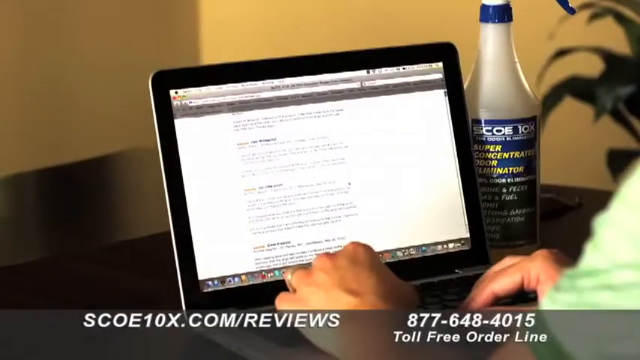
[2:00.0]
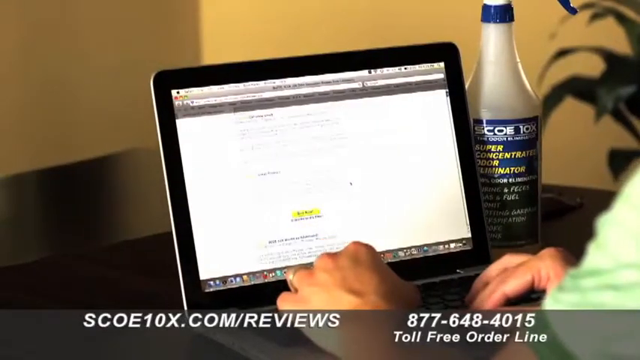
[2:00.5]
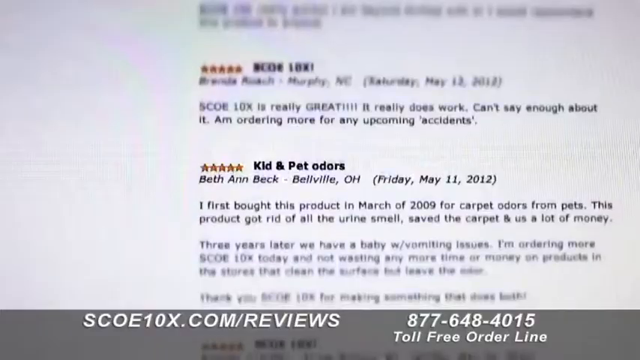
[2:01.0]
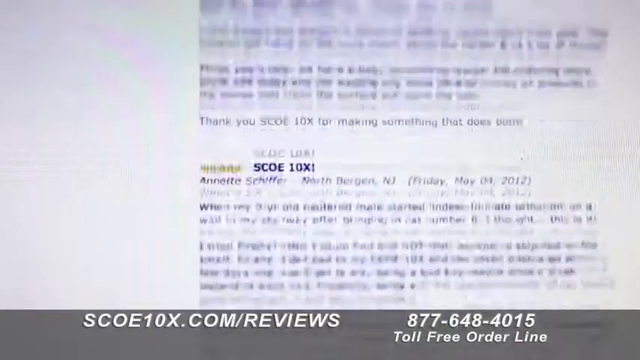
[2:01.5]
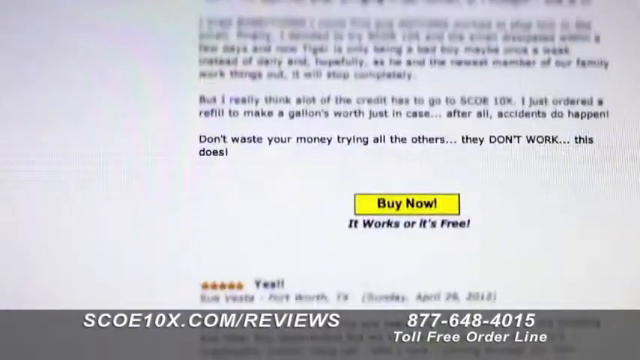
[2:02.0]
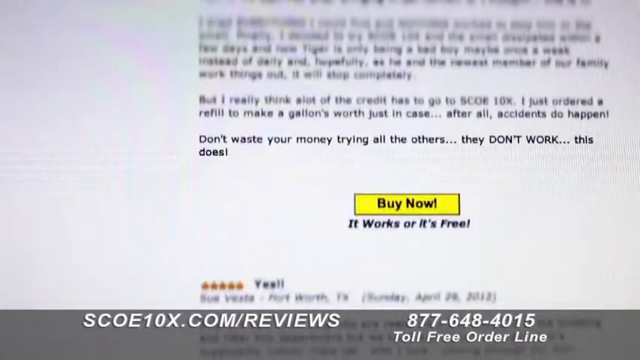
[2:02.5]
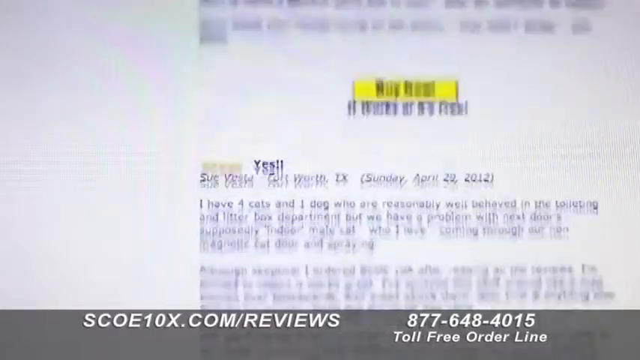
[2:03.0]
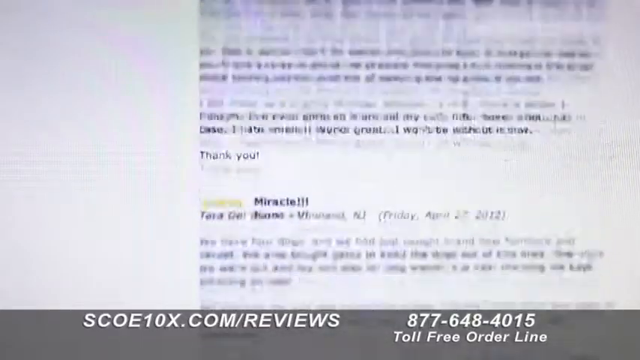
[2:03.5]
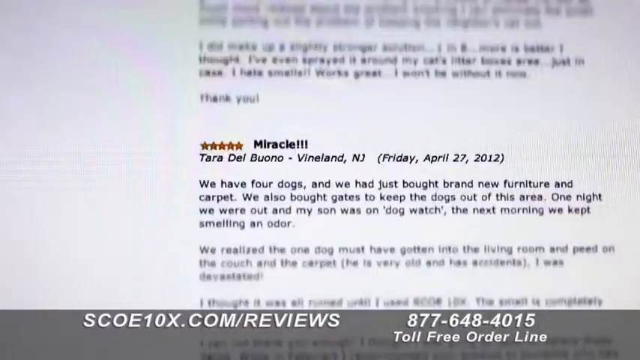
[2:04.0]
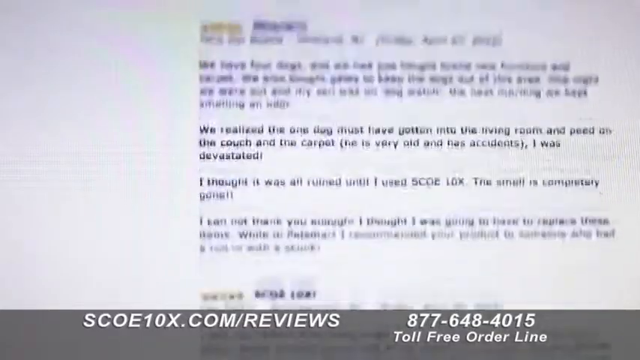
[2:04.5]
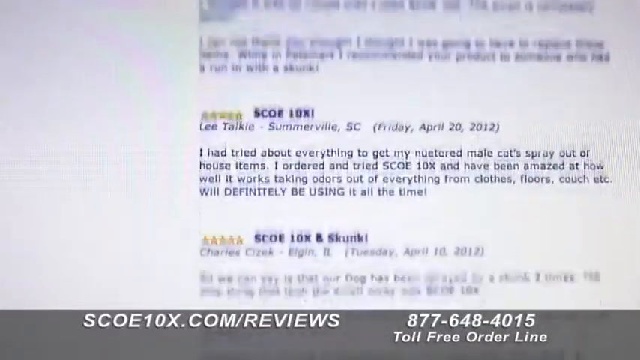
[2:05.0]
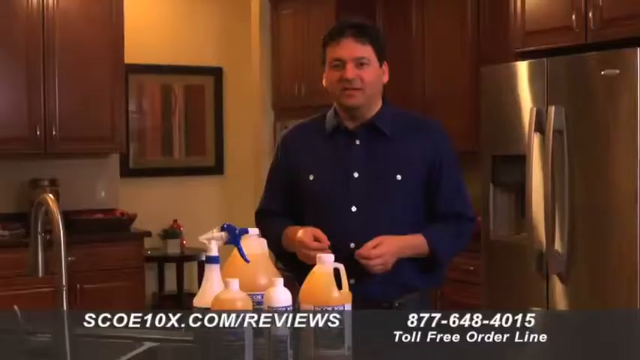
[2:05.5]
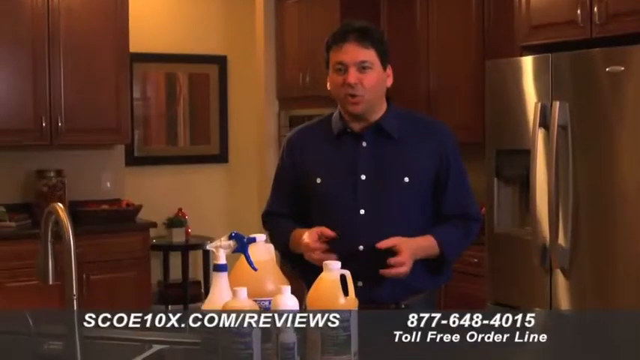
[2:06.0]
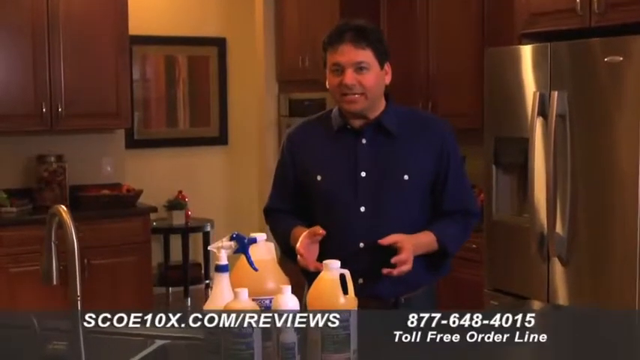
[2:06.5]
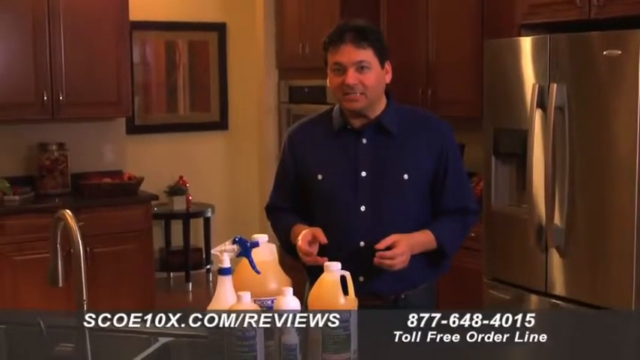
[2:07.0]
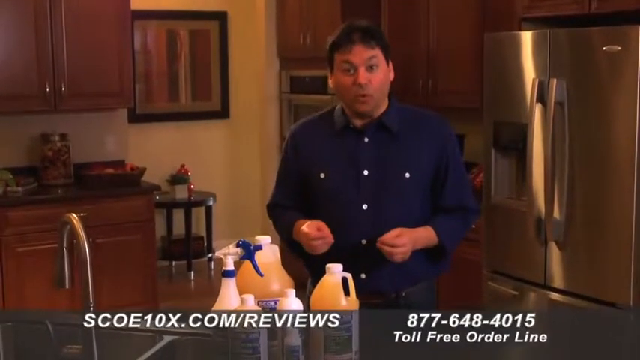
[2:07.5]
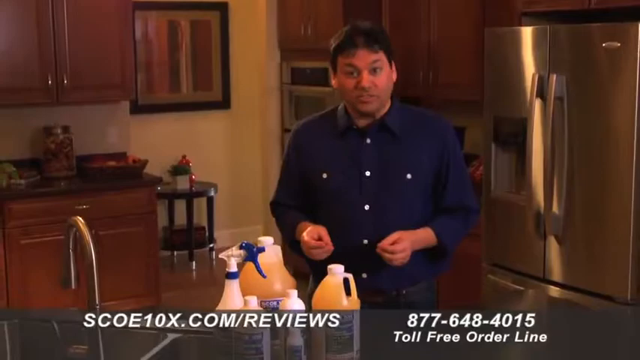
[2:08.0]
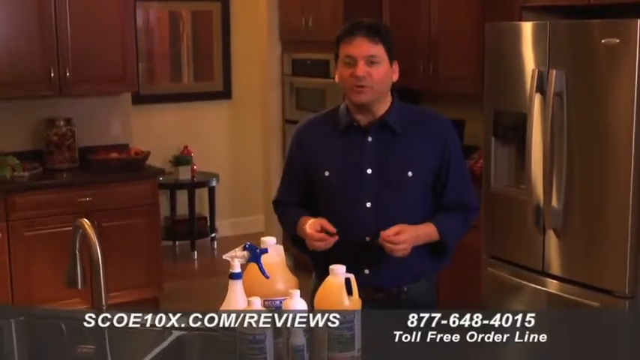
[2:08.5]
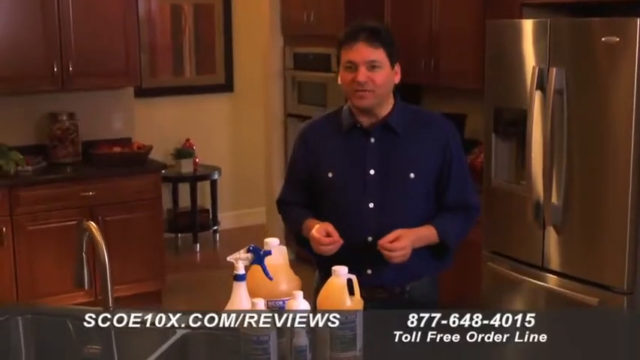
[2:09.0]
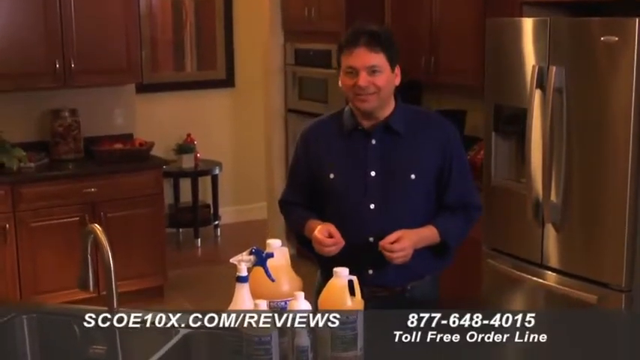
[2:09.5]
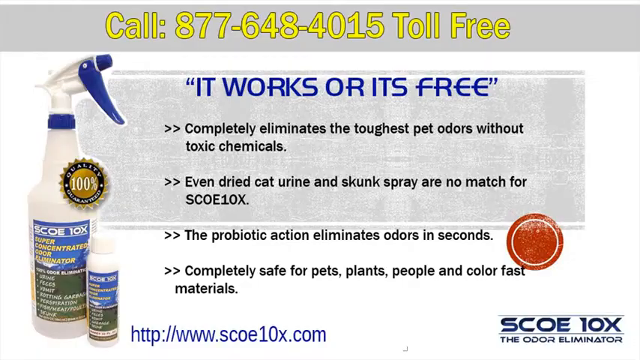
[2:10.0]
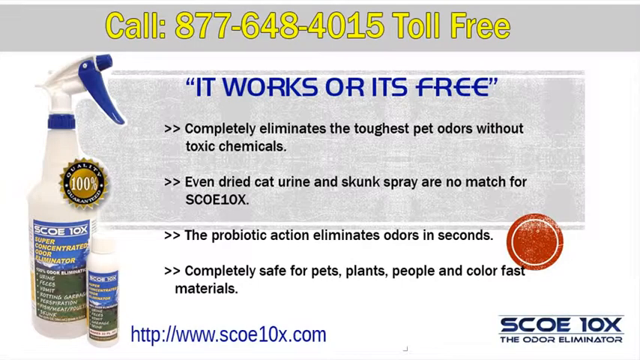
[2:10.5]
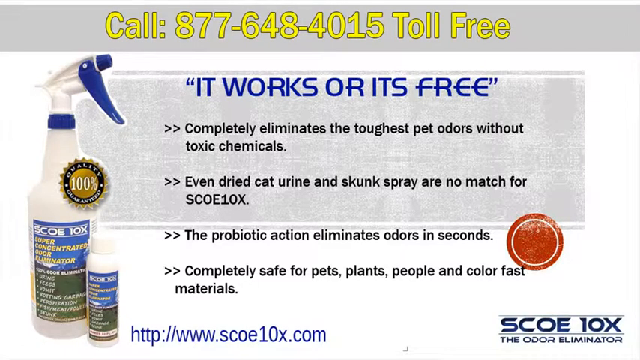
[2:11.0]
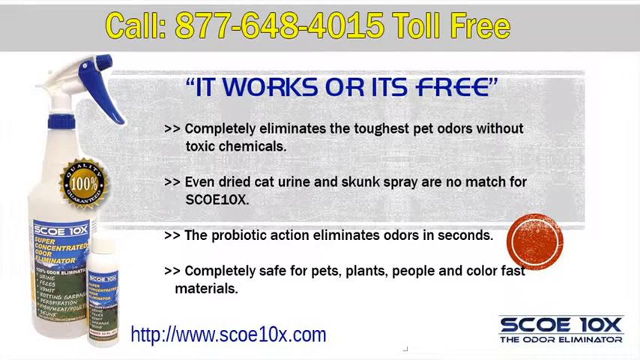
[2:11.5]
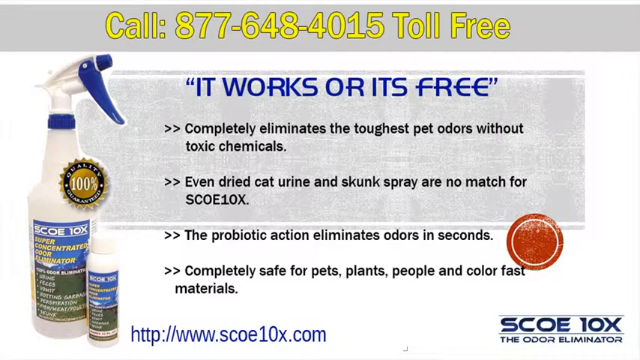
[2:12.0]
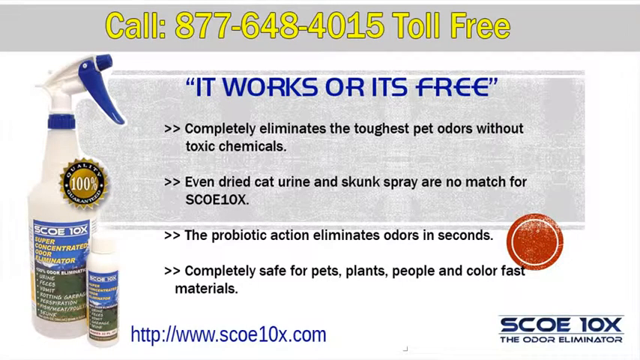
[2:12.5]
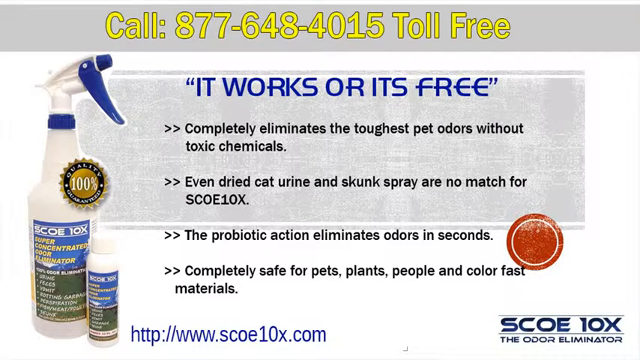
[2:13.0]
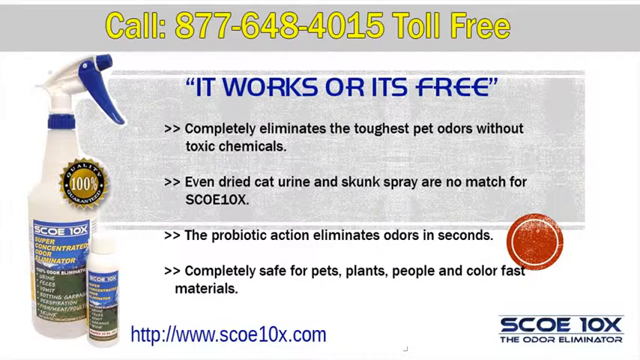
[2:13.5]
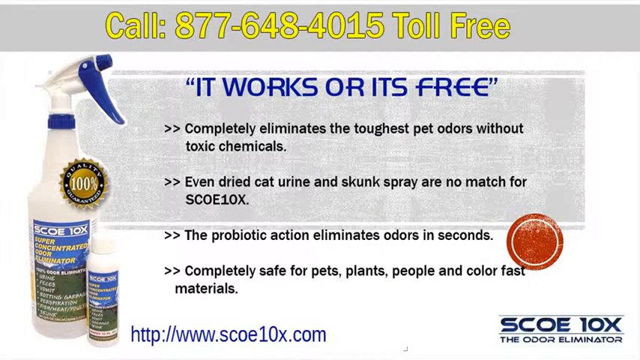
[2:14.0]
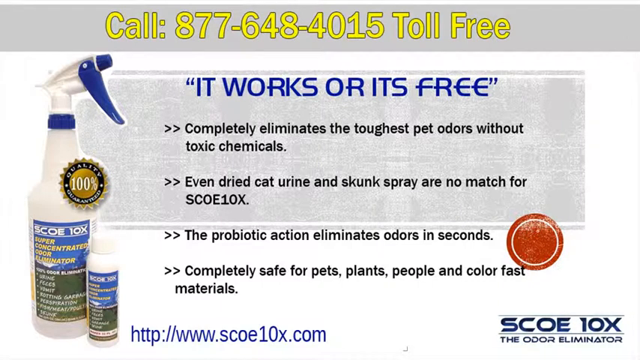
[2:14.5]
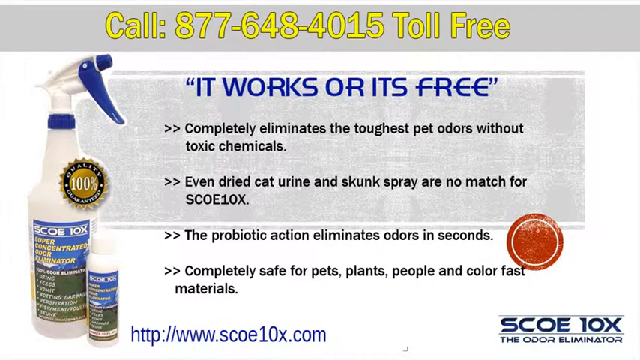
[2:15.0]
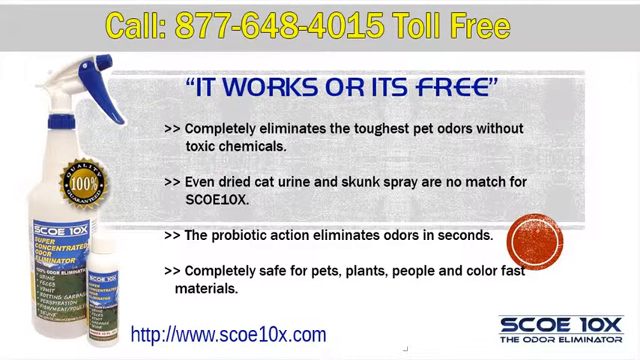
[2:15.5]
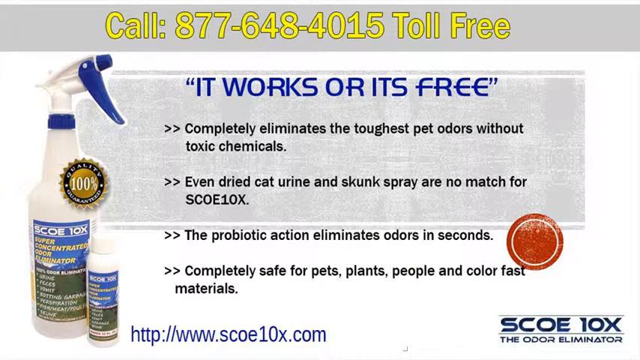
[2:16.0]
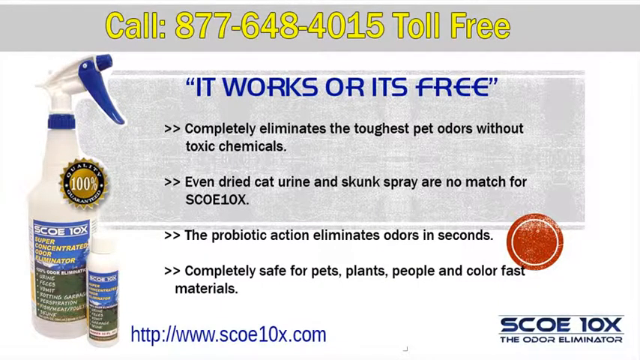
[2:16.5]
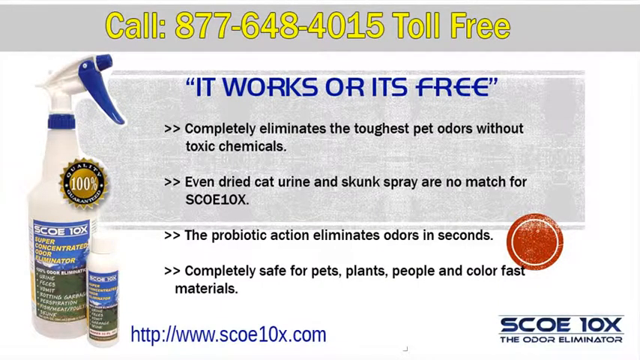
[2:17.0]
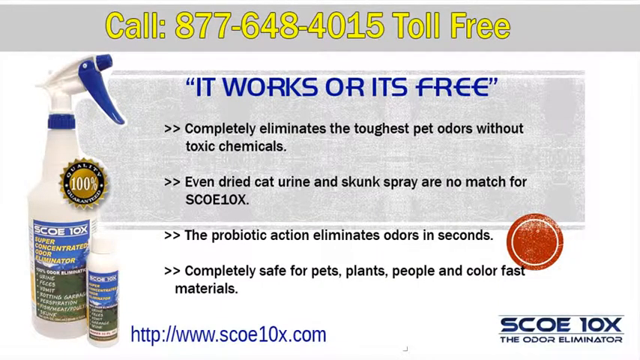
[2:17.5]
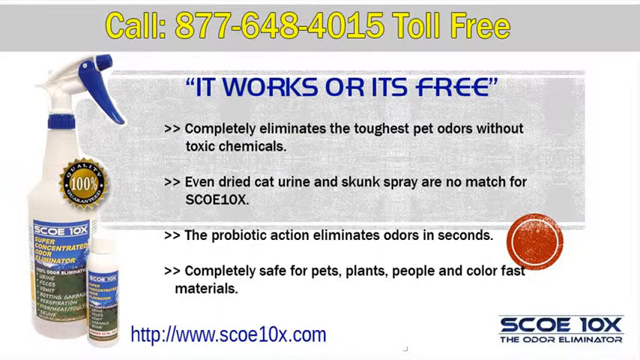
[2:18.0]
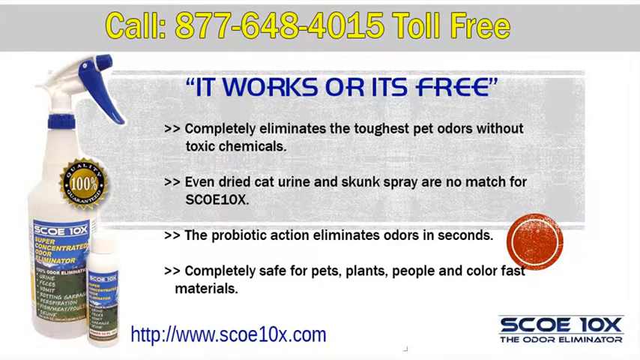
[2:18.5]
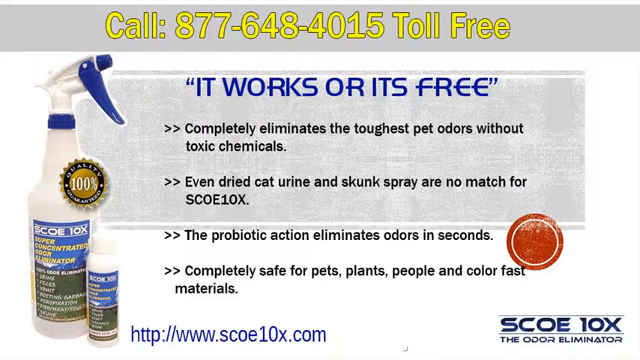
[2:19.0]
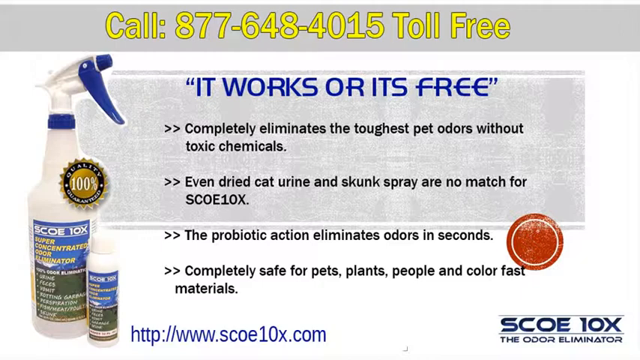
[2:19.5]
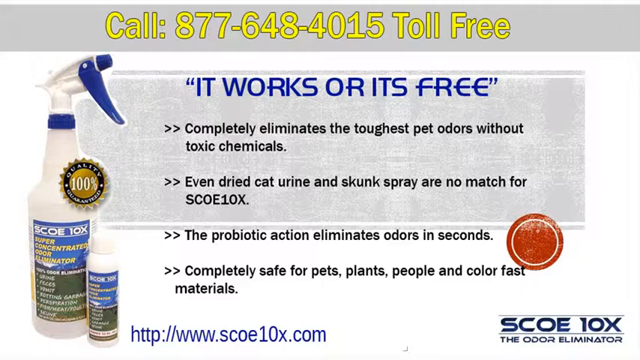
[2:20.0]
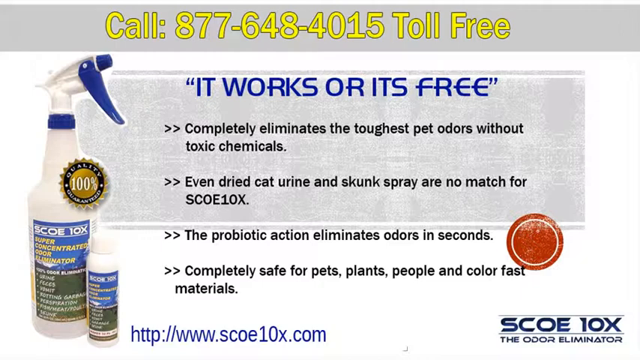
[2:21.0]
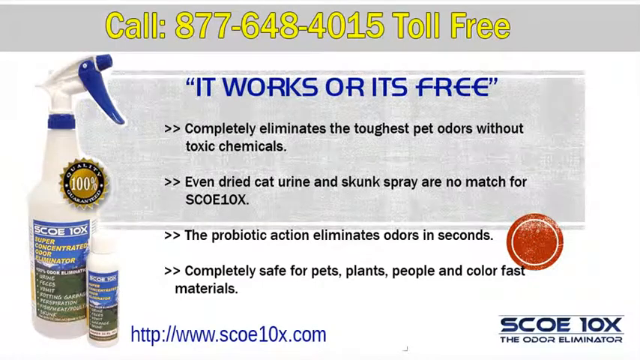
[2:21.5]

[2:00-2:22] The same man is still looking at what looks like the Sko 10x website, with the camera over his left shoulder on the laptop screen. It seems to kind of zoom in to the page, which seems to be the review page of the Sko 10x website, showing multiple kind of five-star reviews. The screen scrolls to the bottom of the page, then cuts back to the man in the kitchen, speaking intently while looking off to the viewer's left, his right. He turns to the viewer's right to look at the camera, the camera pans up, and he continues speaking to the camera, using his hands for emphasis, moving them from open to kind of closed in a pinched position. The video then cuts to a screen that says "call 877-648-4015 toll-free."